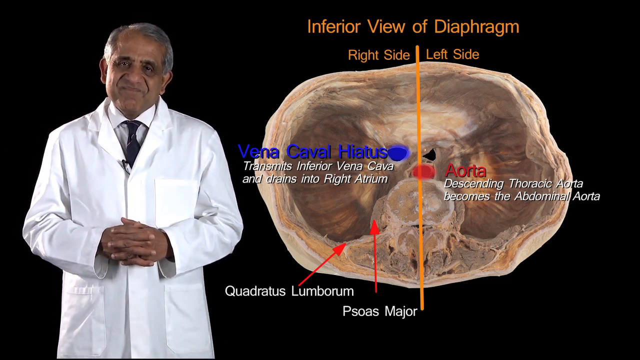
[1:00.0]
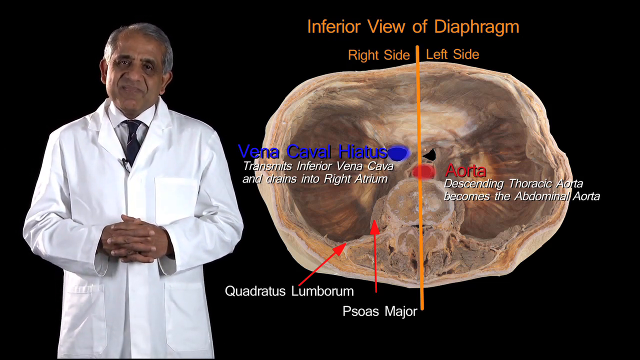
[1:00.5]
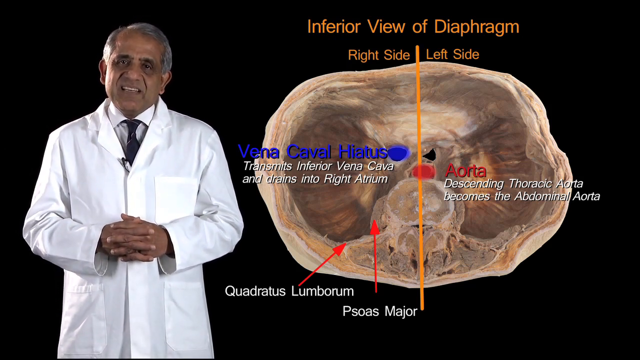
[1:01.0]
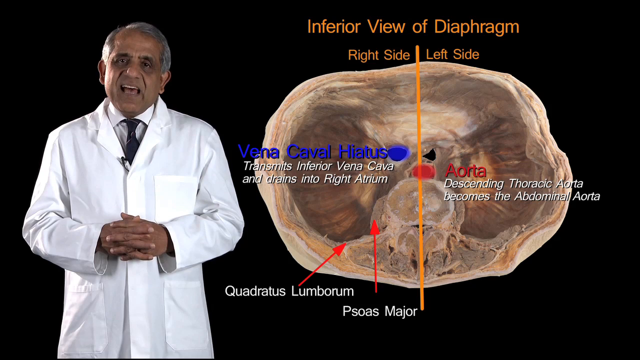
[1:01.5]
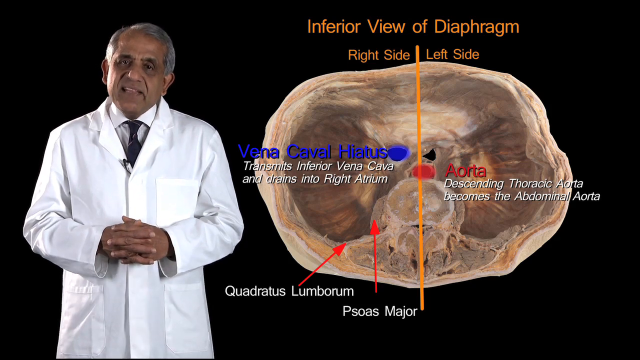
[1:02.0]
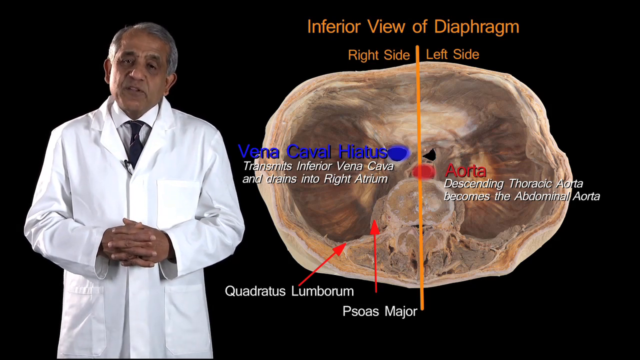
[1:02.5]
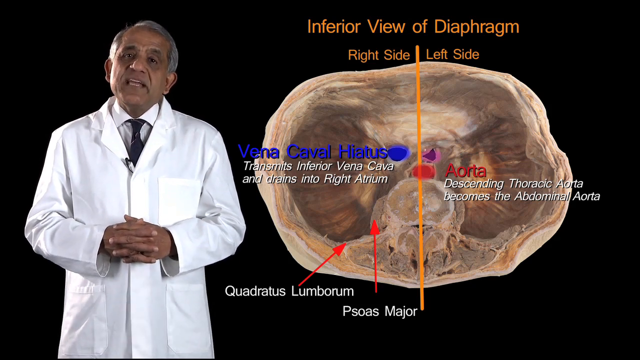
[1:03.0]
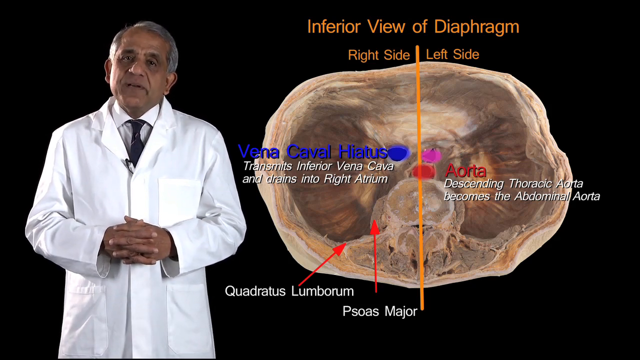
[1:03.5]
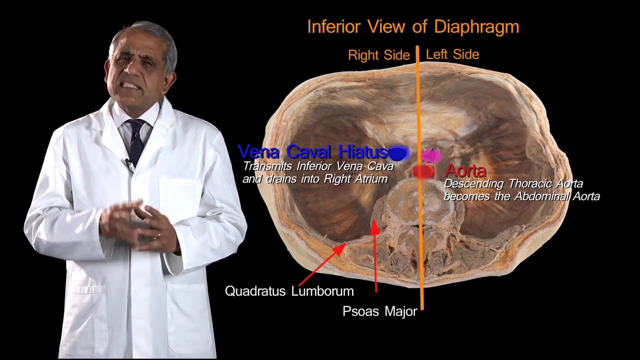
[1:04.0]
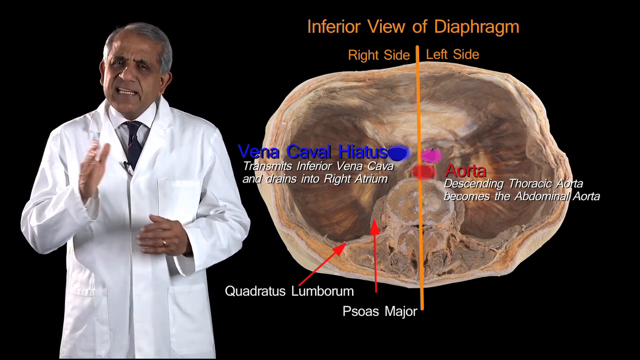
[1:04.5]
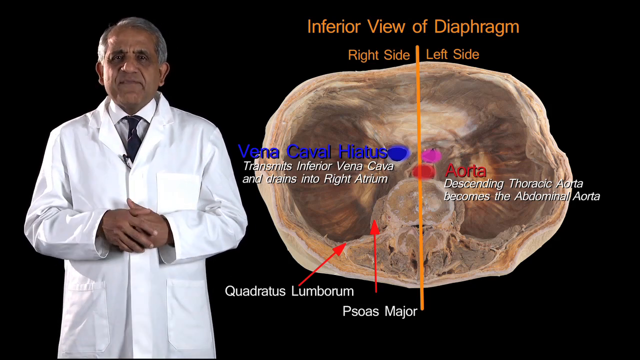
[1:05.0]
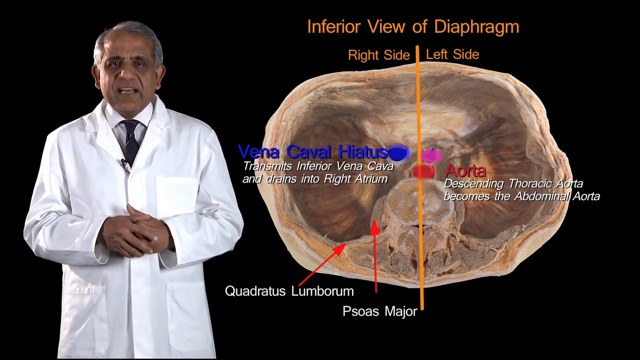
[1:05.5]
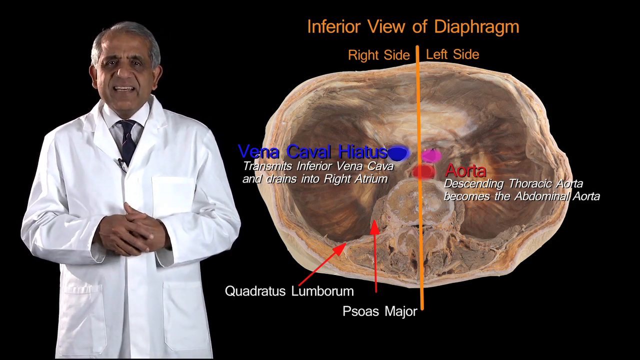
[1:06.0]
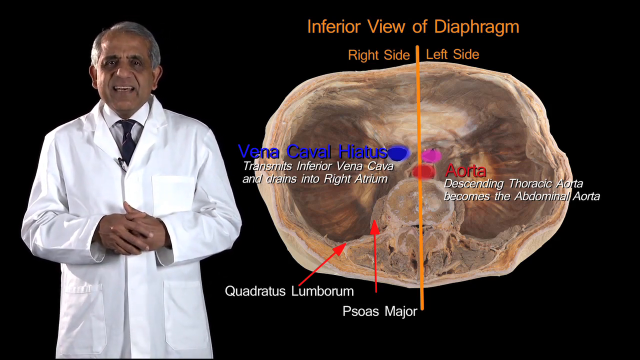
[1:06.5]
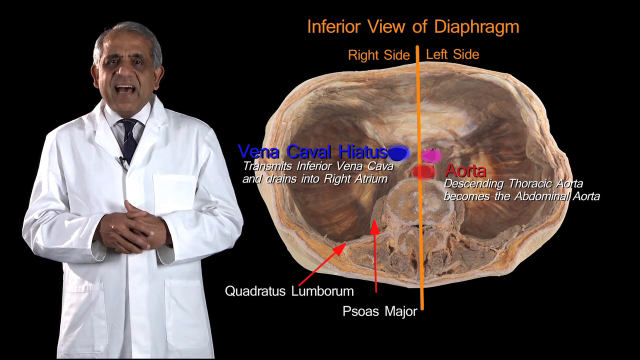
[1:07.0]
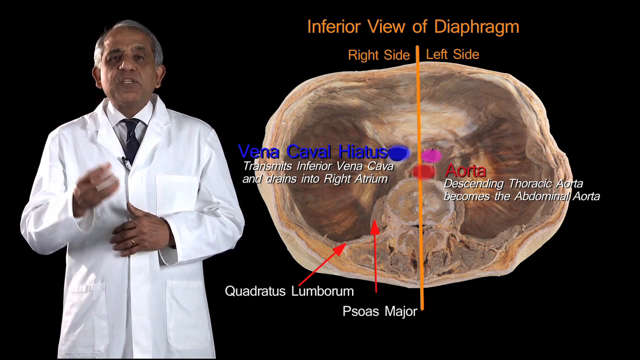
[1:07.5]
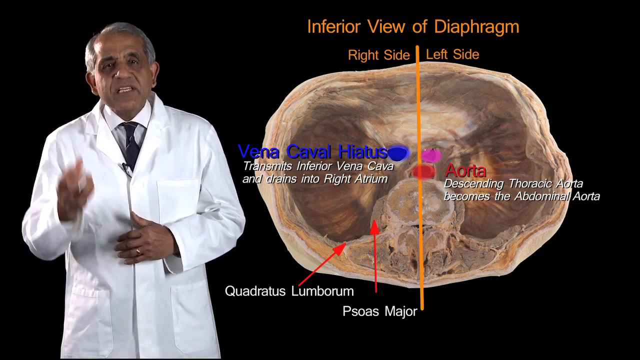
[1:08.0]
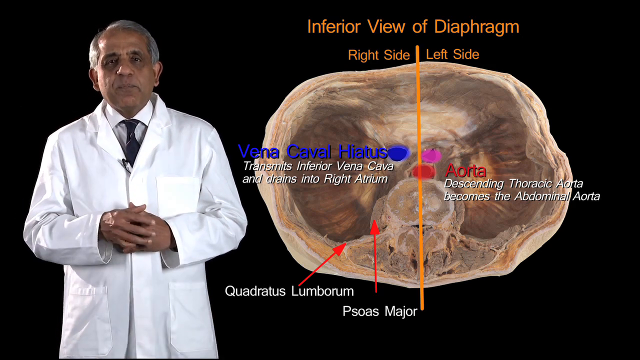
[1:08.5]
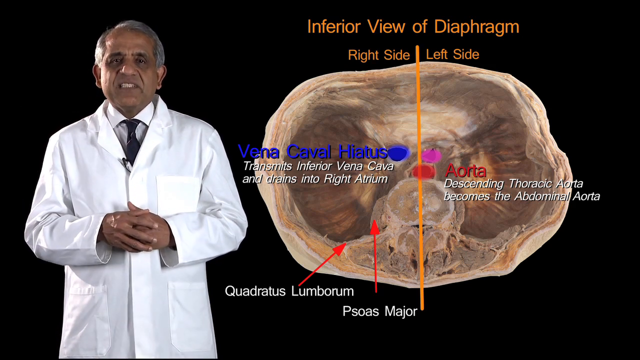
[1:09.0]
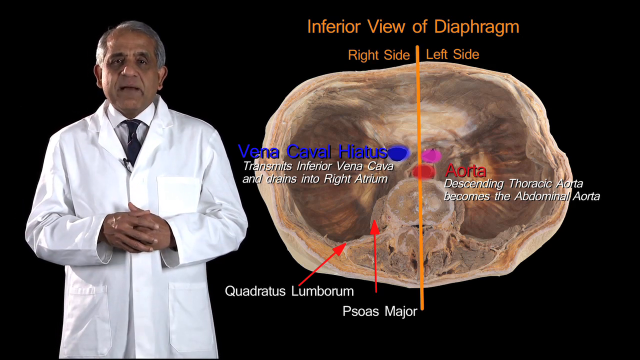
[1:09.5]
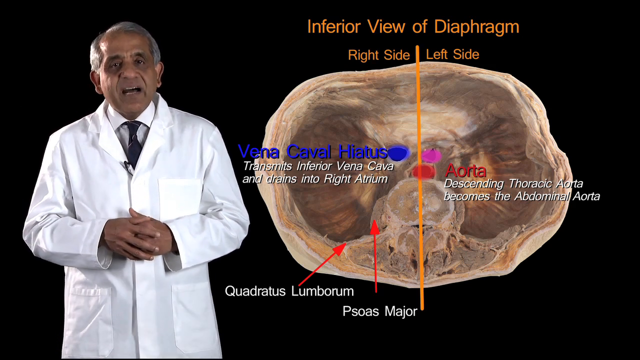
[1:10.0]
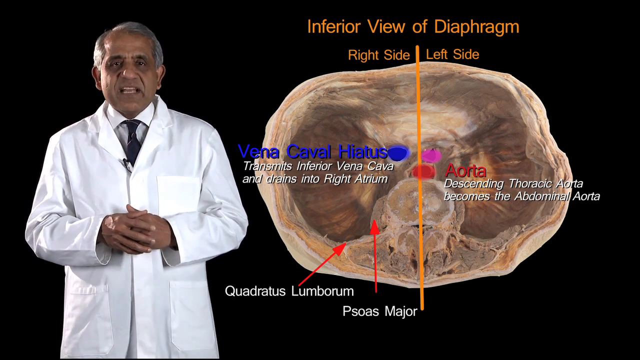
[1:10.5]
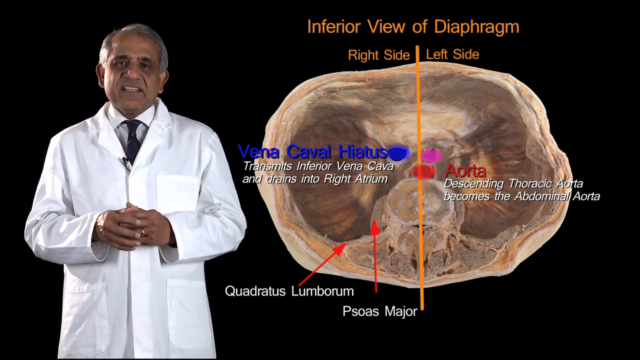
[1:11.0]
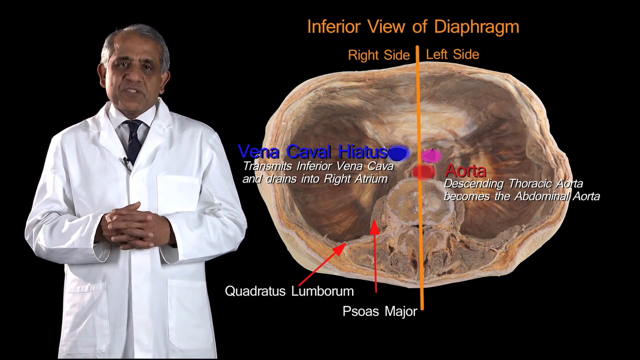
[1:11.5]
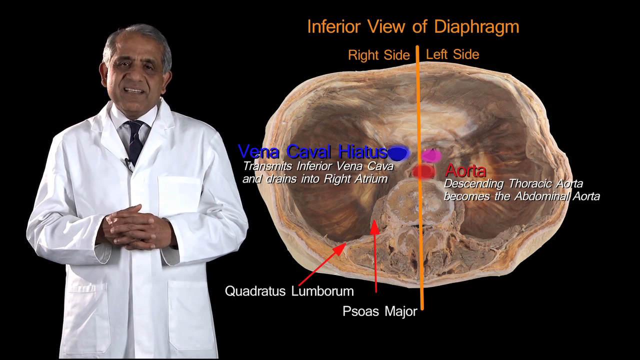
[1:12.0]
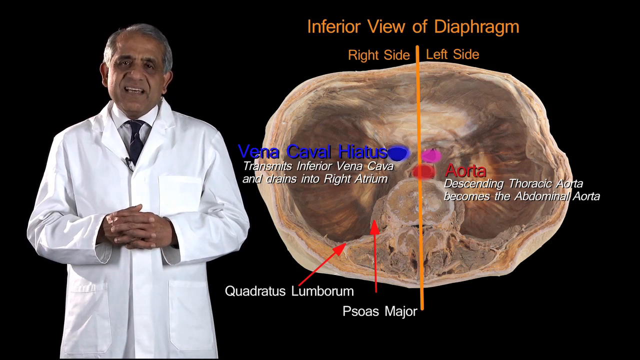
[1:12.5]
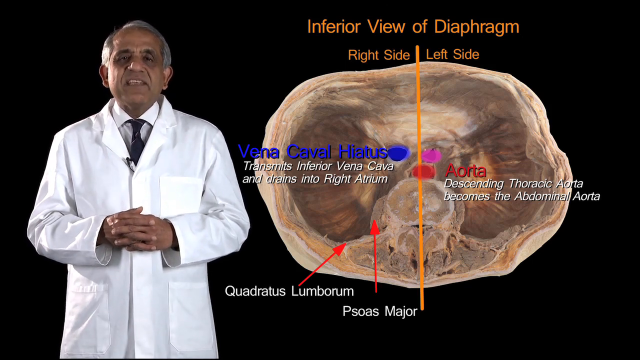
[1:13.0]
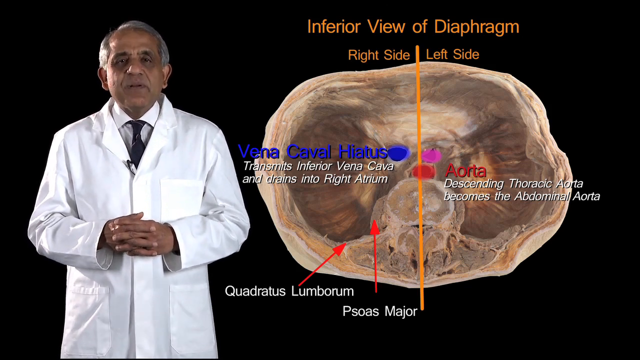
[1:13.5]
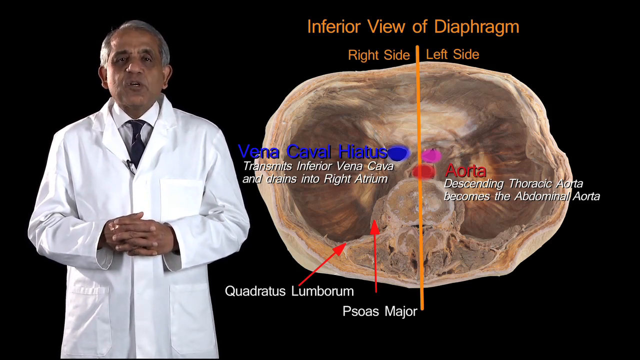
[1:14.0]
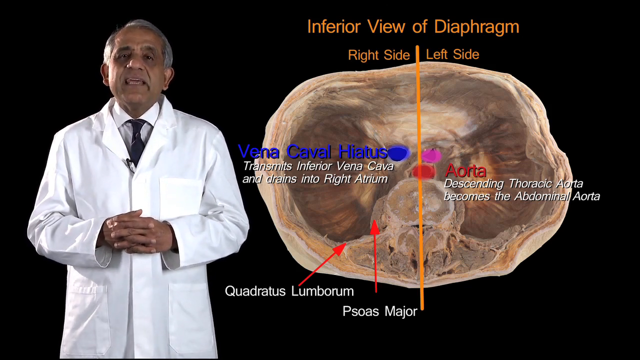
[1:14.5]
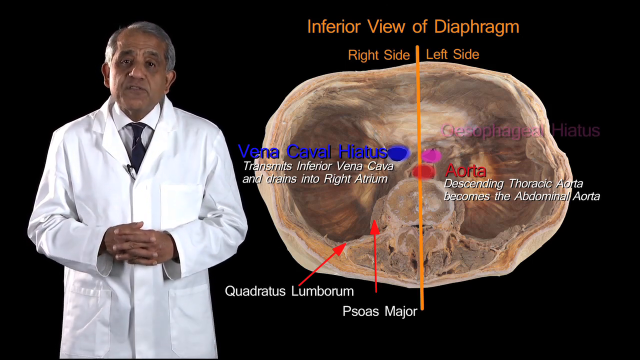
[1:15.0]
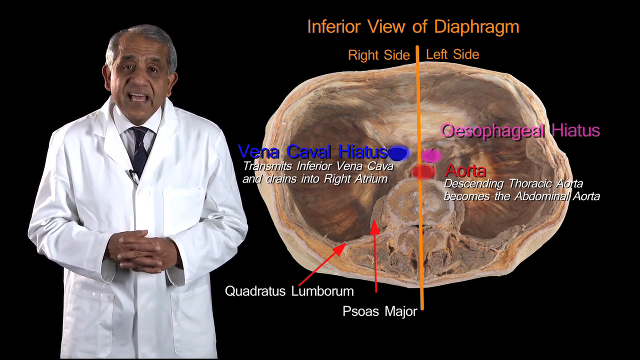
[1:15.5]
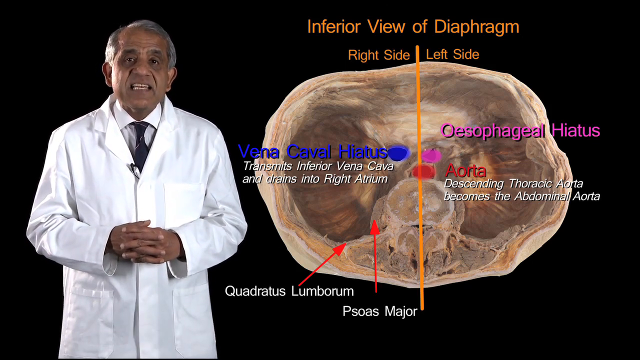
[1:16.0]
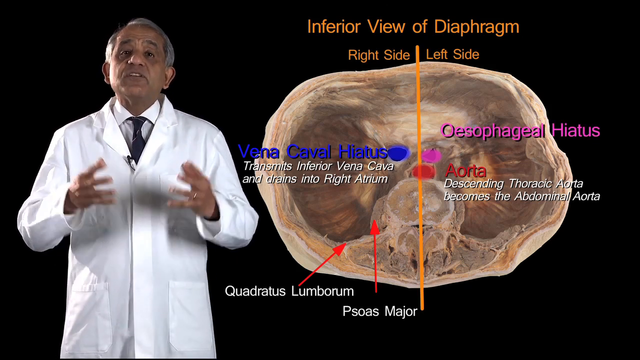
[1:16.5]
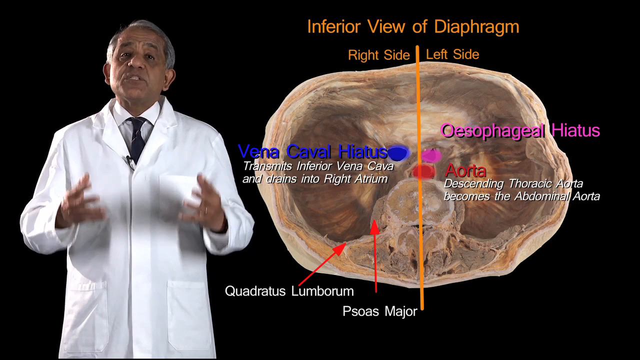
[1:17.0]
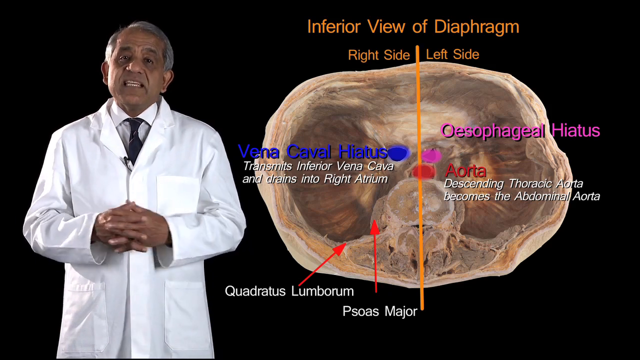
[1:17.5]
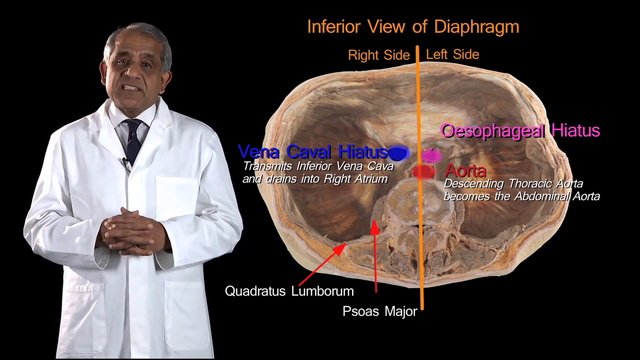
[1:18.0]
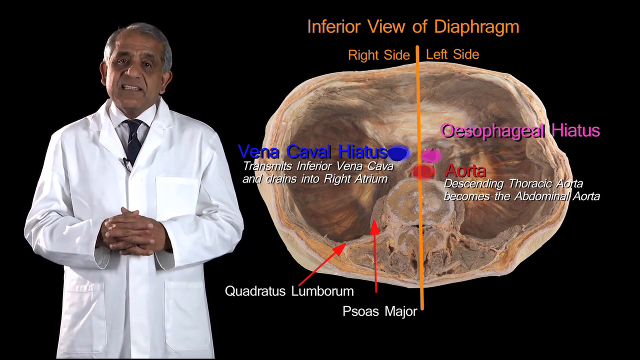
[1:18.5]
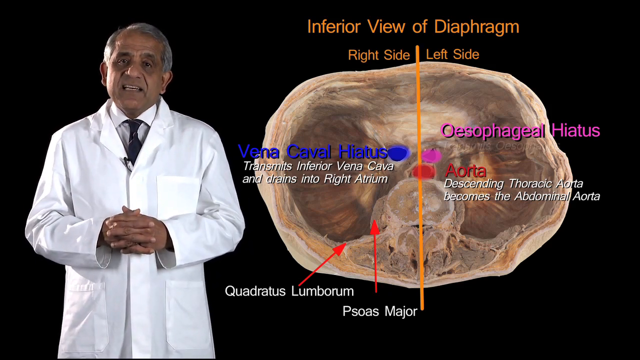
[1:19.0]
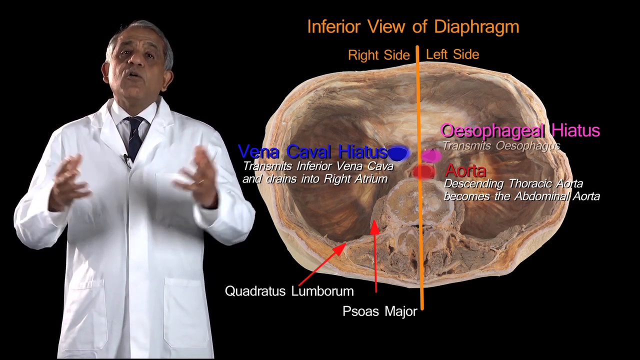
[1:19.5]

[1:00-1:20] The professor remains on the left in a white jacket, white shirt and dark tie, next to a labelled graphic of the inferior view of the diaphragm. Orange writing labels the right side and left side. On the left side, "aorta" is in red lettering with "descending thoracic aorta becomes the abdominal aorta" in white lettering underneath. On the right side, blue lettering reads "vena caval hiatus", with "transmits inferior vena cava and drains into right atrium" underneath. The labels for the quadratus lumborum and the psoas major are still there. The professor continues to speak, gesturing with his hands, though they are mainly closed in front of him. The background is still black, and nothing changes except some of the labelling on the screen.